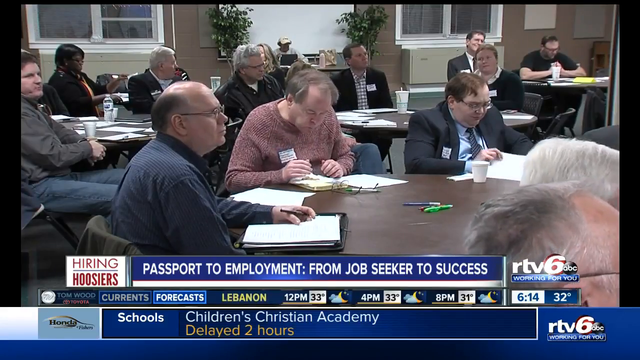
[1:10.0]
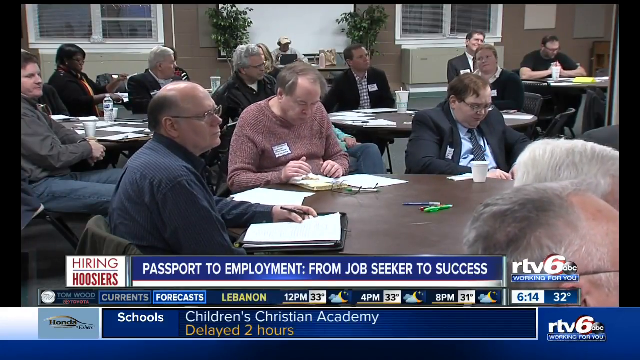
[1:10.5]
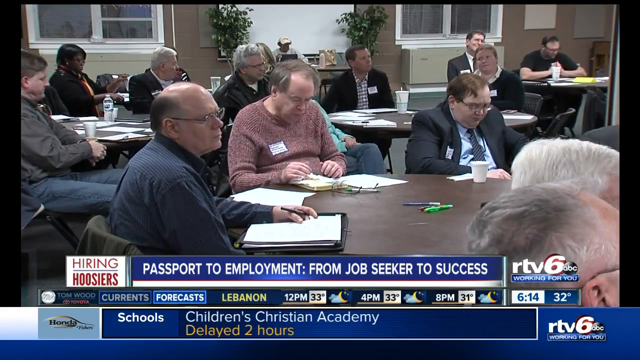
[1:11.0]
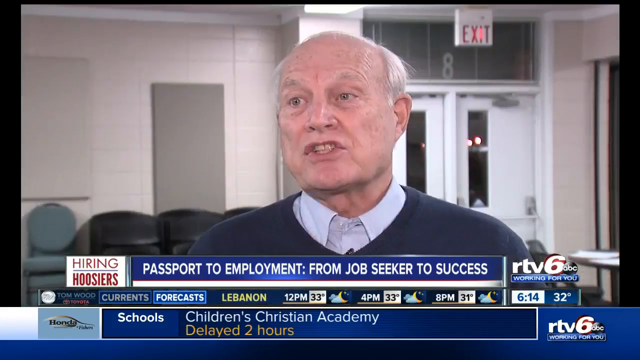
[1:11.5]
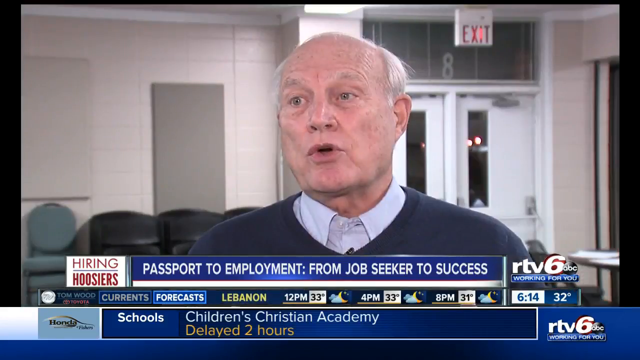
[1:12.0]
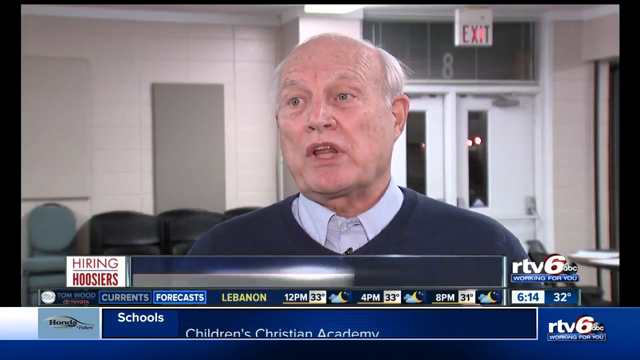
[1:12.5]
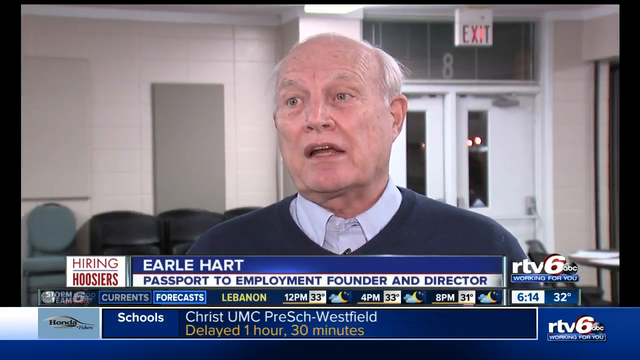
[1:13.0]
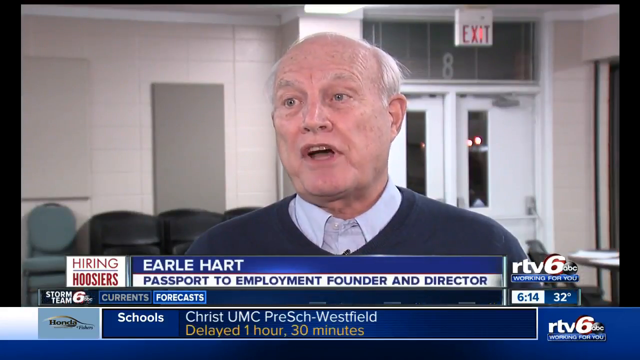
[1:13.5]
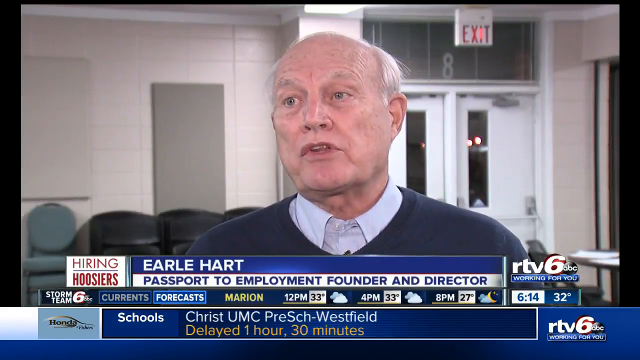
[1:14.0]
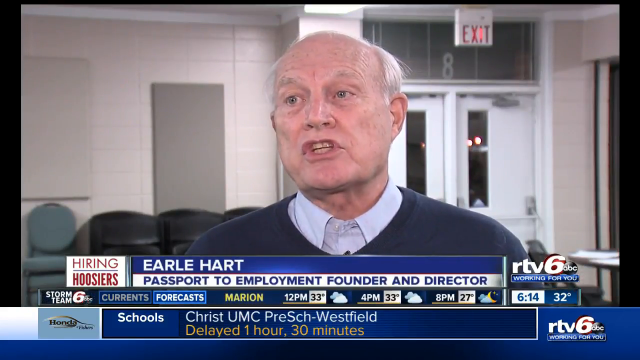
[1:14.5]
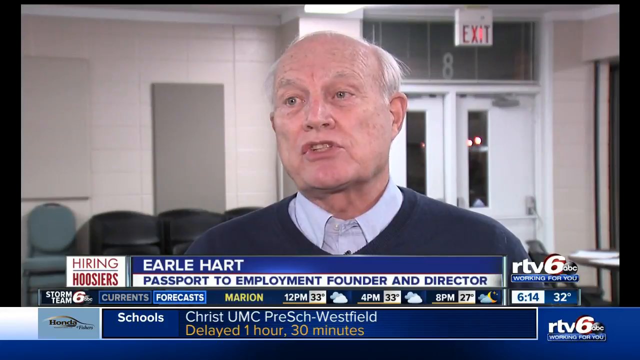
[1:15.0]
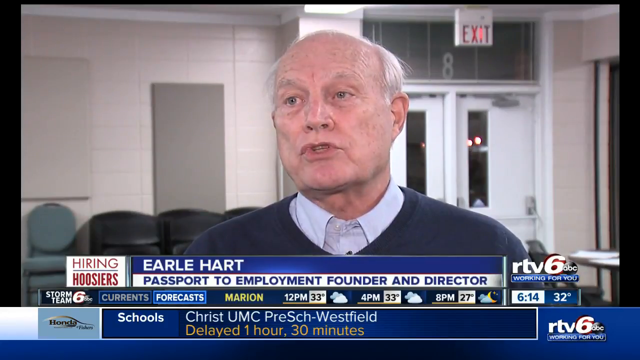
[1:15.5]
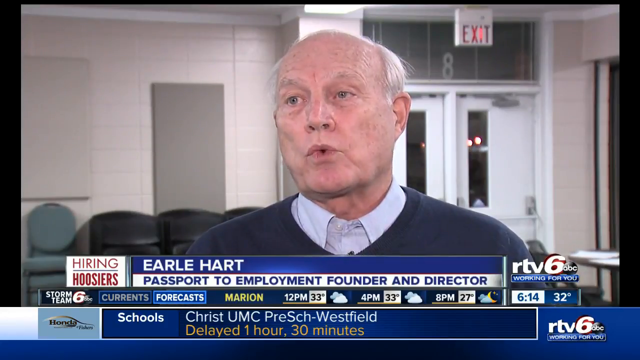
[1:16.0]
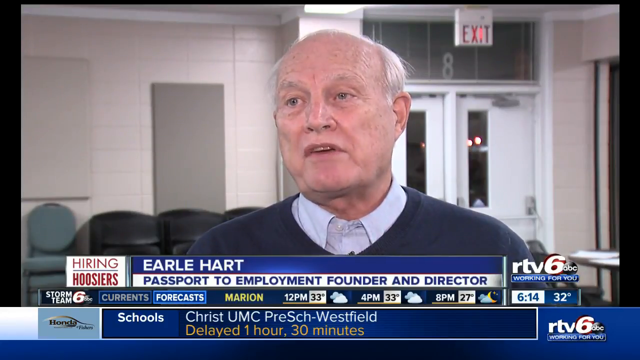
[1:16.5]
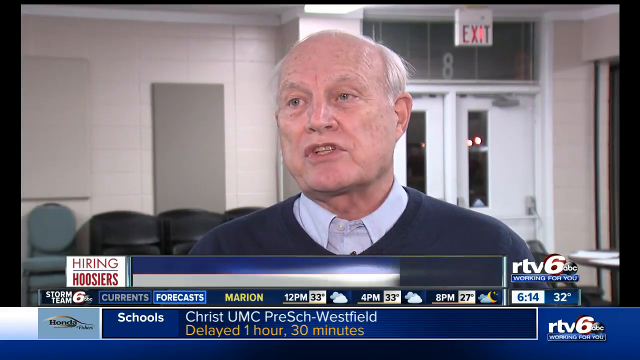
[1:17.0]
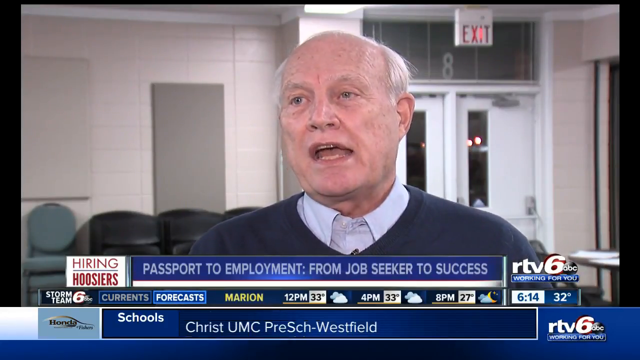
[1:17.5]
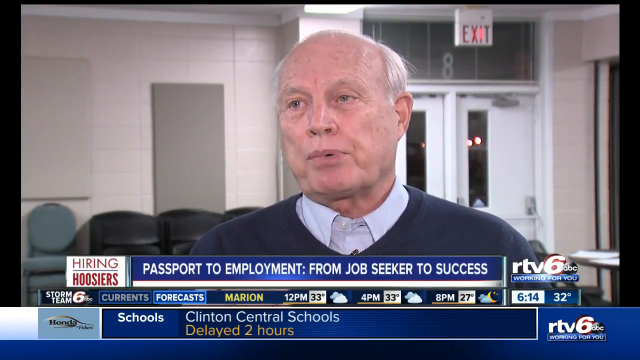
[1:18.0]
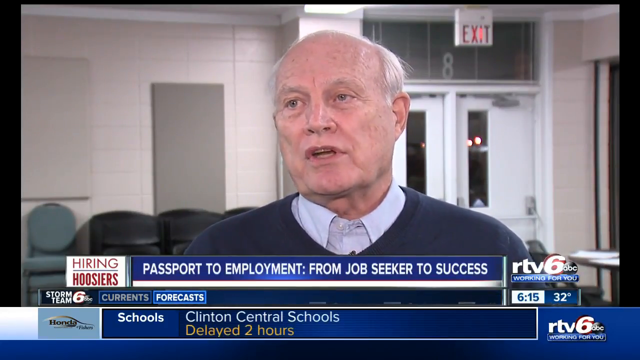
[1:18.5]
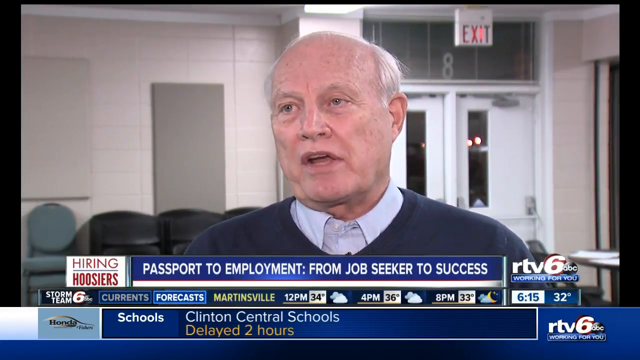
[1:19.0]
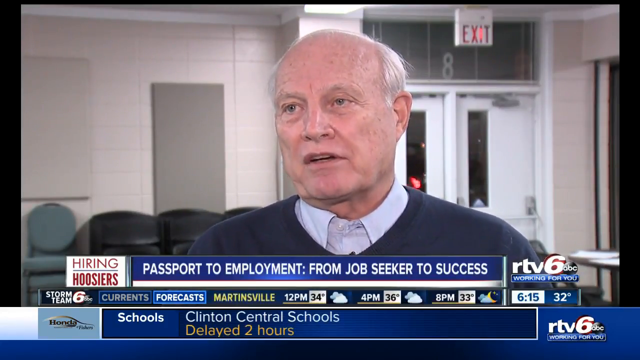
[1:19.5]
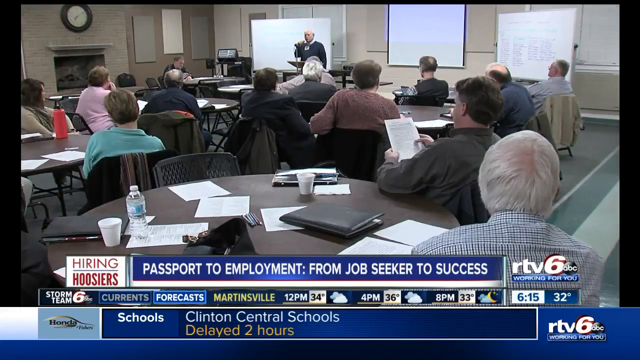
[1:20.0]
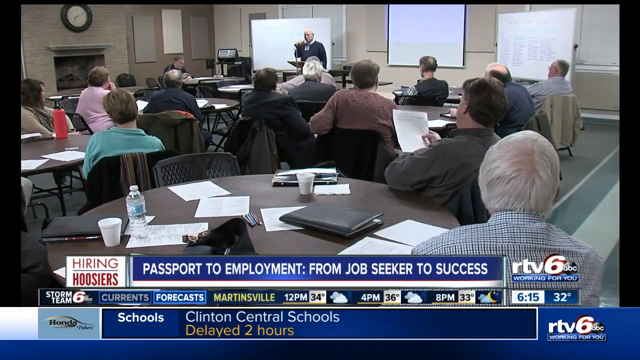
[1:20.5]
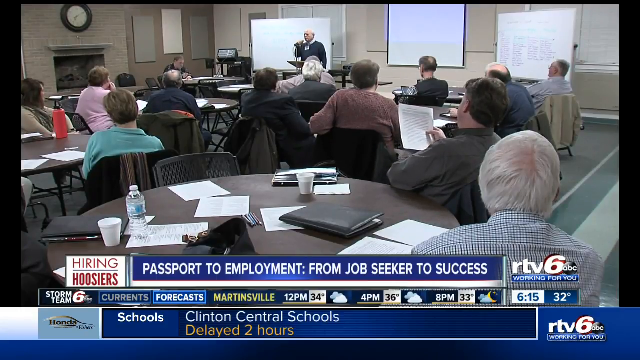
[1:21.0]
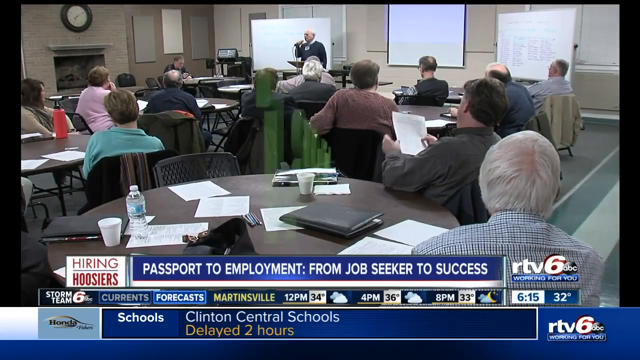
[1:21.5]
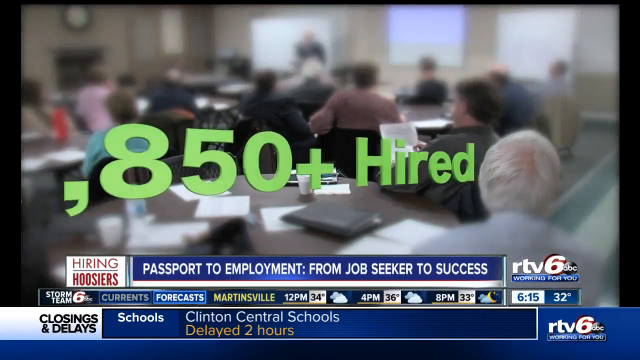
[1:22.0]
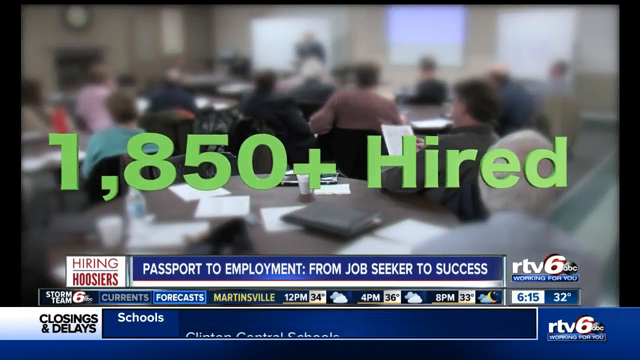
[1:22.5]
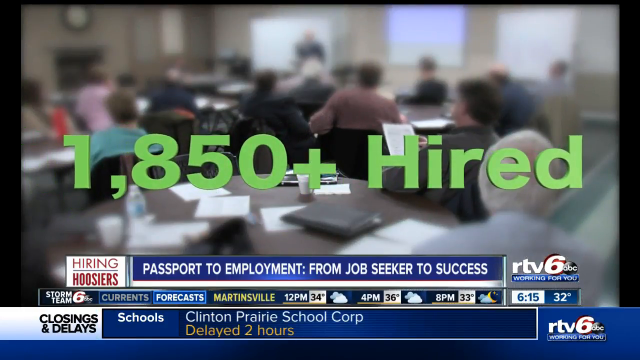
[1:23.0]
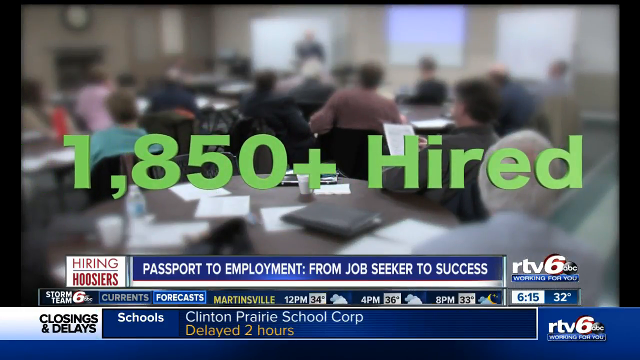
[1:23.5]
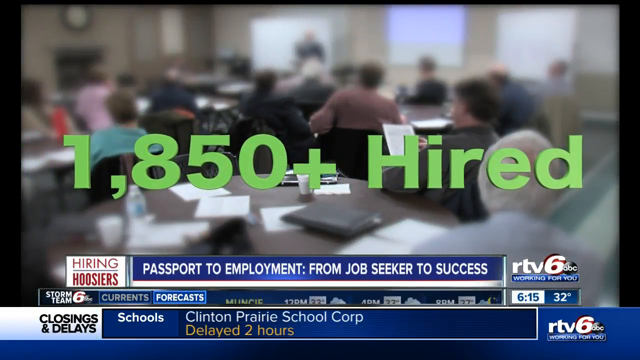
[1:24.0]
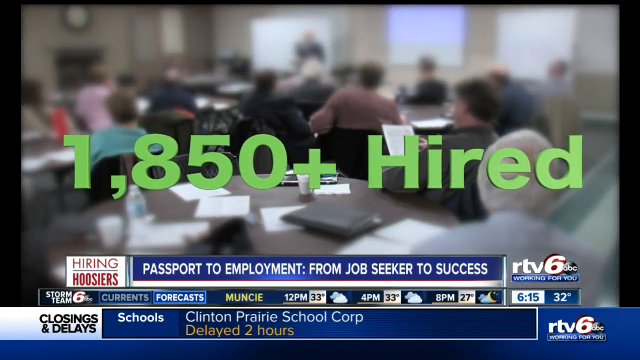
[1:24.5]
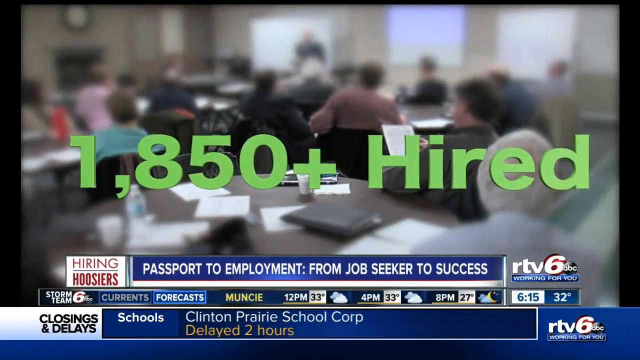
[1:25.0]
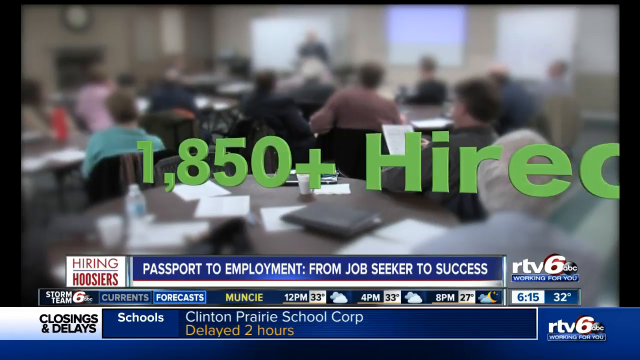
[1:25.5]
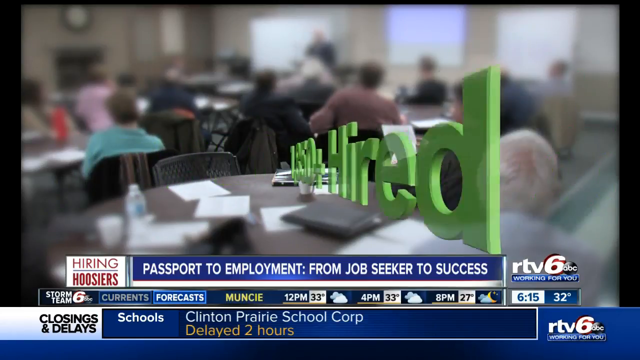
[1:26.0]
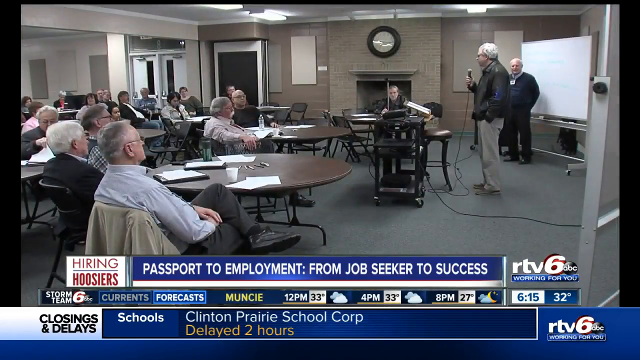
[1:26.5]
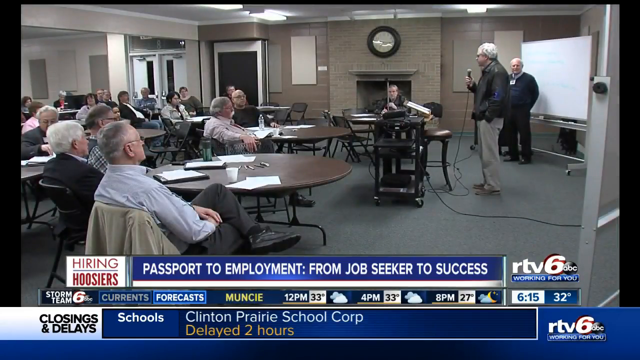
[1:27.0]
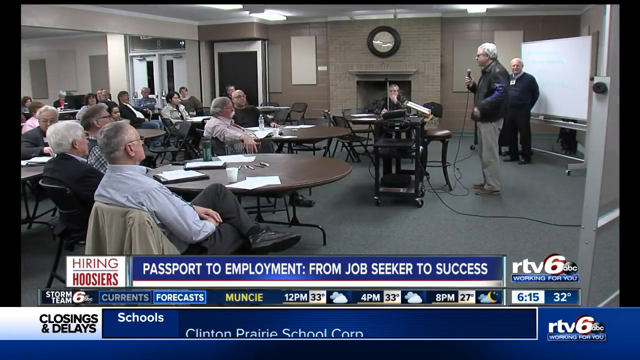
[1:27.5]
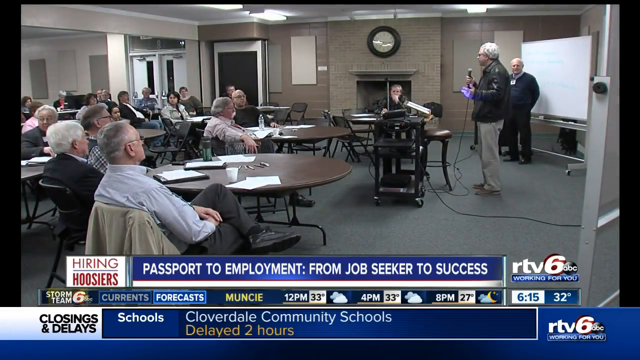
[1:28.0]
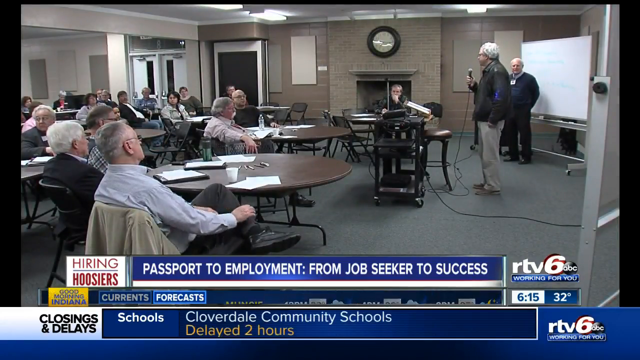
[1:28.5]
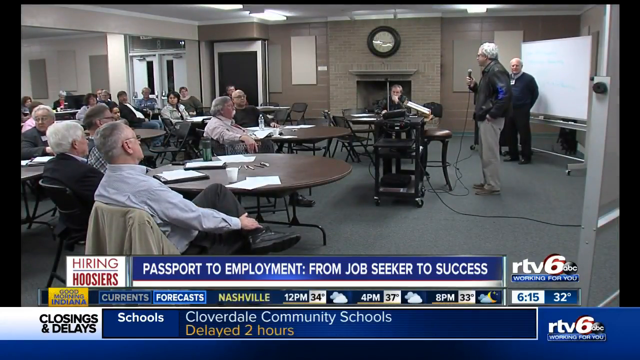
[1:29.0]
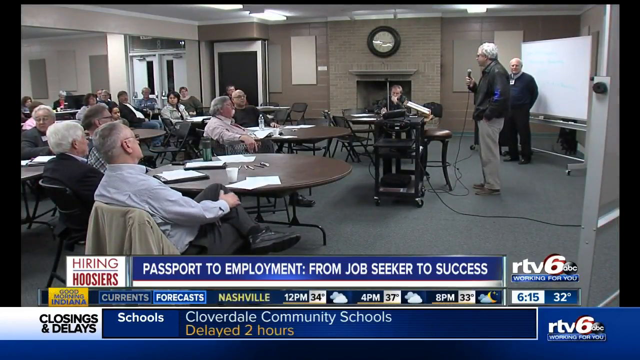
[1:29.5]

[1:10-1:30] The whole room is shown, with people still waiting for the man at the front. Earl Hart, Passport to Employment Founder and Director, speaks to the newscaster, then walks away. Beneath him, text reads "Passport to Employment: from job seeker to success". A figure of "1850 plus" flashes onto the screen in bold green print and then disappears. The man in the leather coat is at the front talking; some people listen while others look at their papers. The conference room is large enough to hold all the tables and attendees.